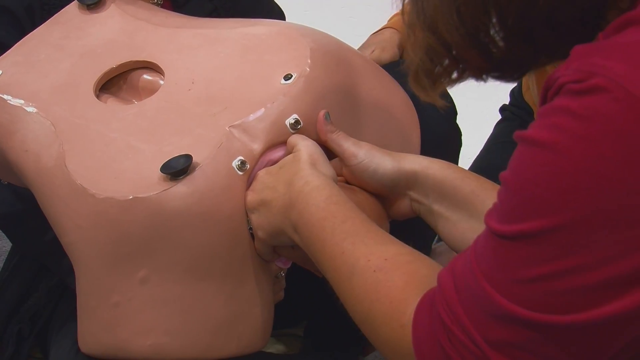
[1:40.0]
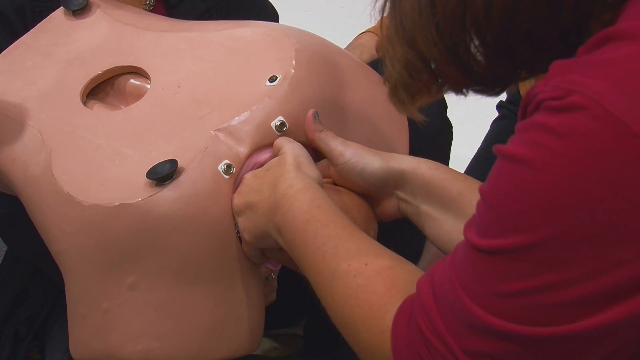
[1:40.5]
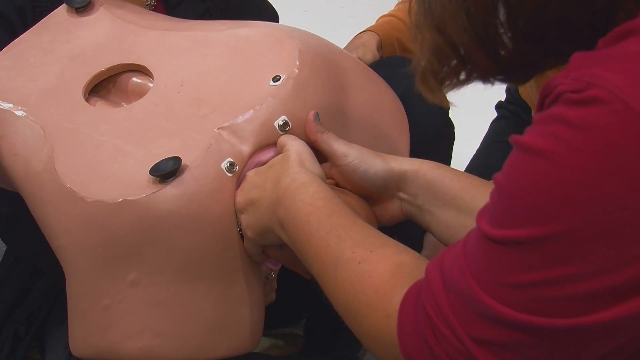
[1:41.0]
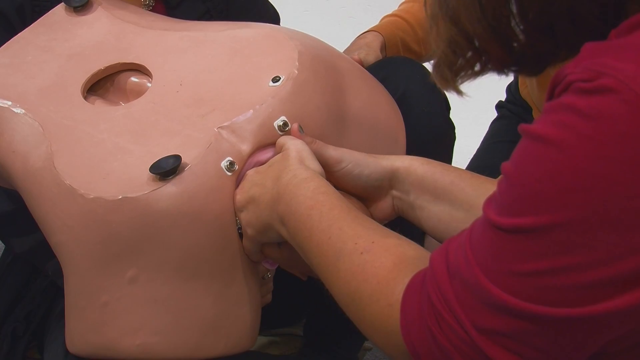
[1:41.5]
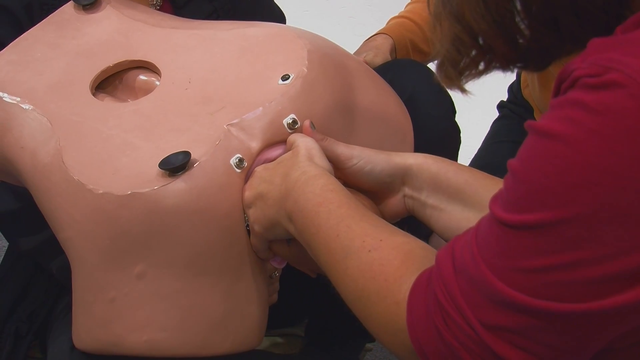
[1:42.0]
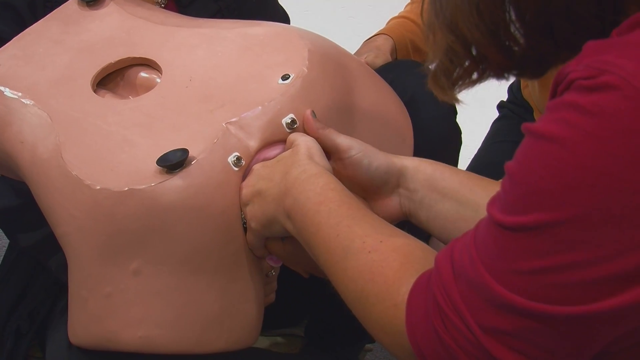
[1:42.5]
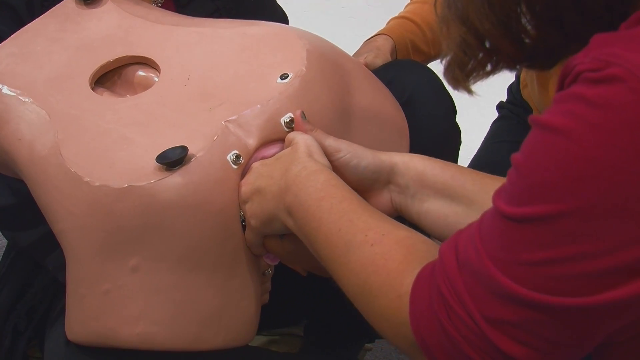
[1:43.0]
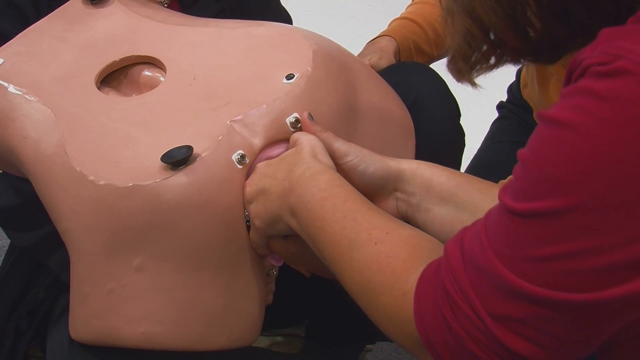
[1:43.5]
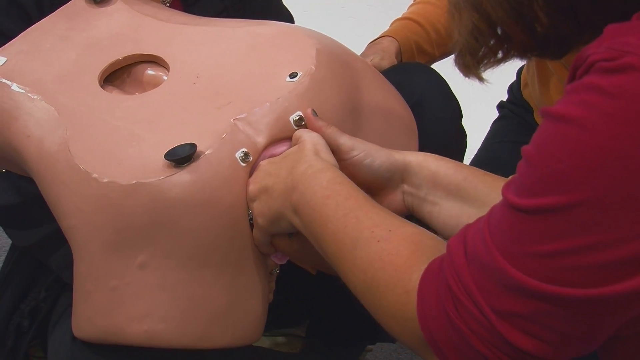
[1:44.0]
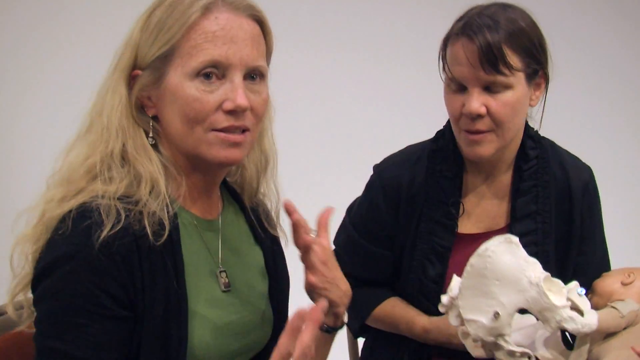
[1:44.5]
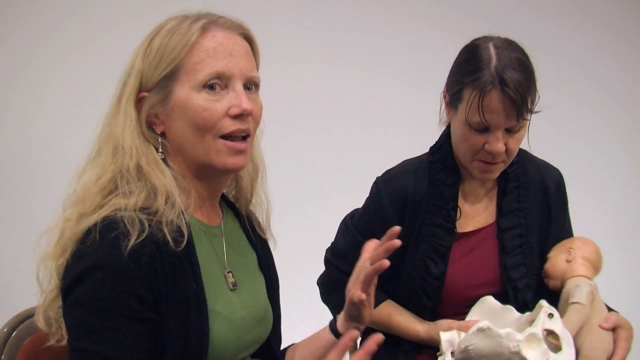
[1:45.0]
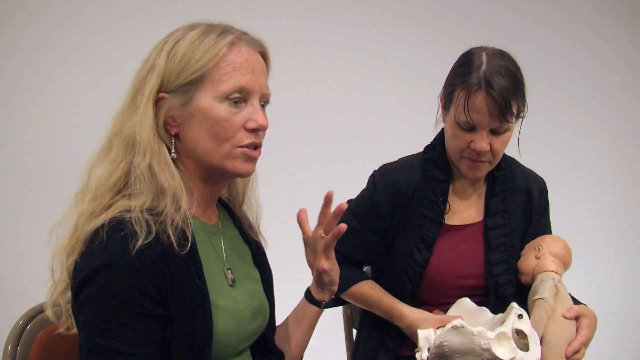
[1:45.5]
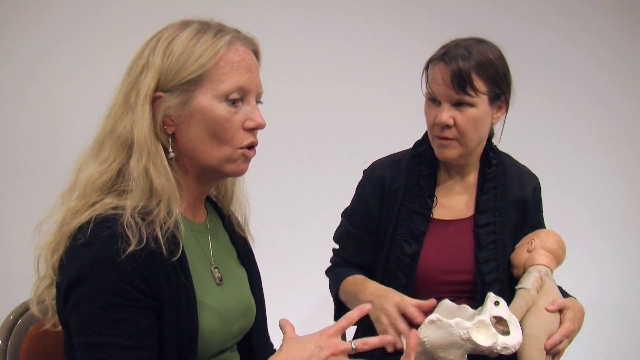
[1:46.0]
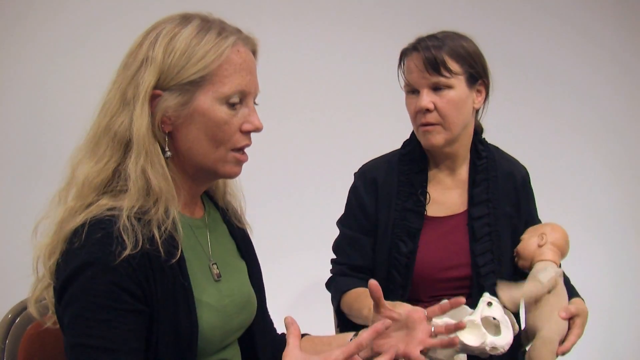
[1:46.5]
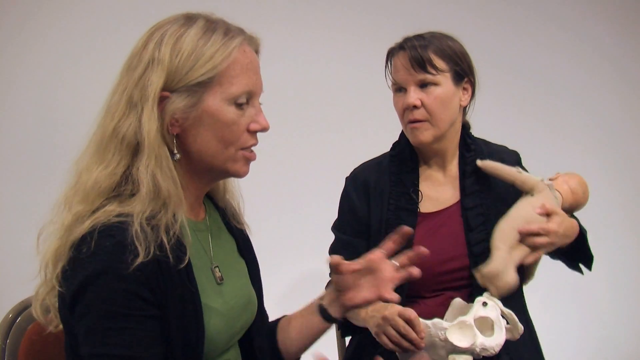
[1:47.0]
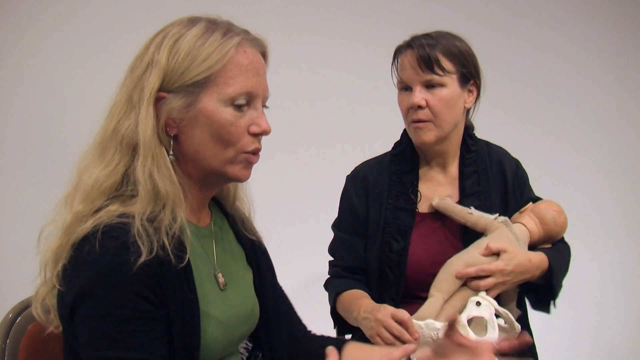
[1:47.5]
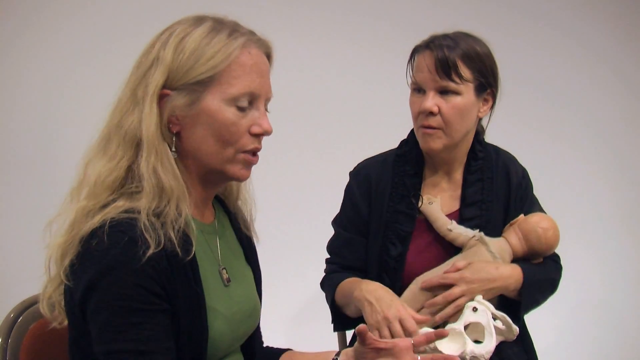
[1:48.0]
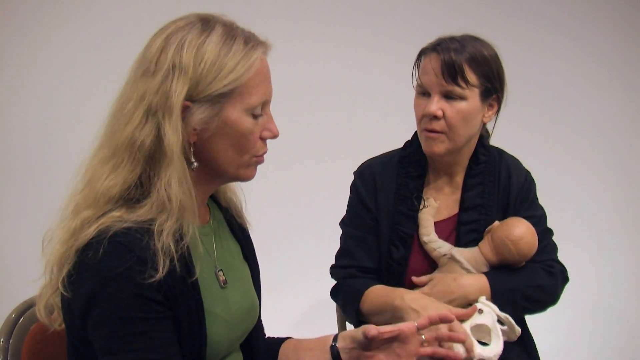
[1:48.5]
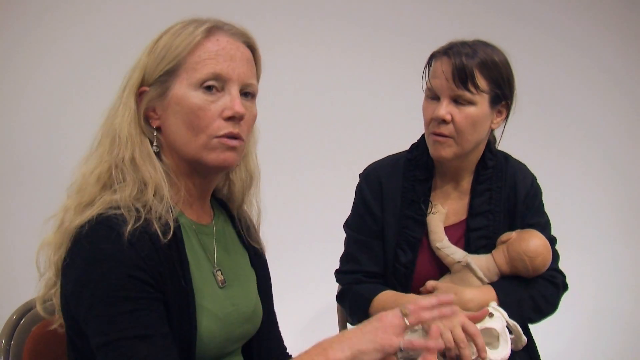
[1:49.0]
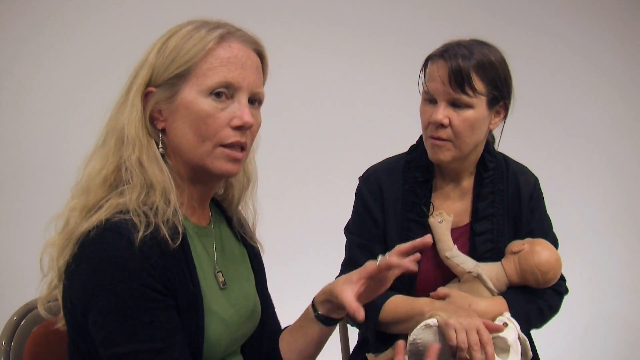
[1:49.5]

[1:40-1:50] The woman with her hand inside the dummy pelvis, attempting to turn the baby, appears to be accompanied by another person wearing an orange top whose face is not seen. The video then changes to Gail sitting back with the woman with long blonde hair and the green top. Gail appears to have the baby in her arms, and the two continue talking while using hand gestures.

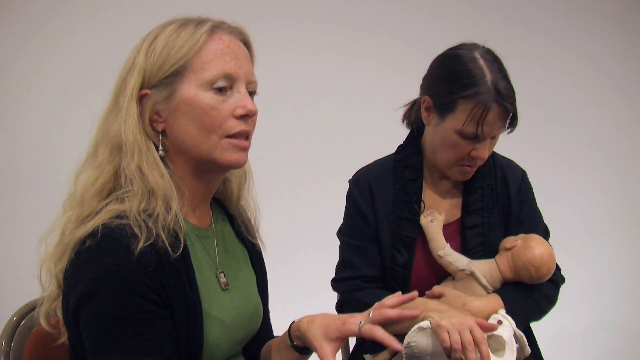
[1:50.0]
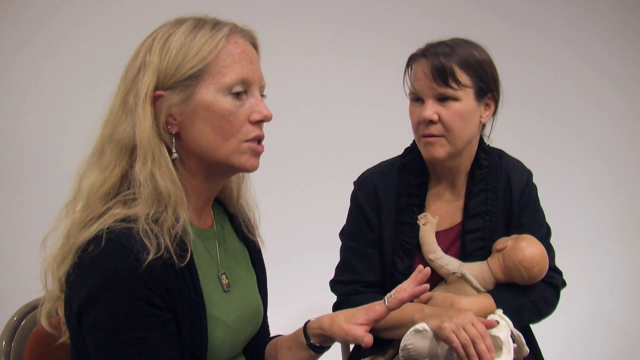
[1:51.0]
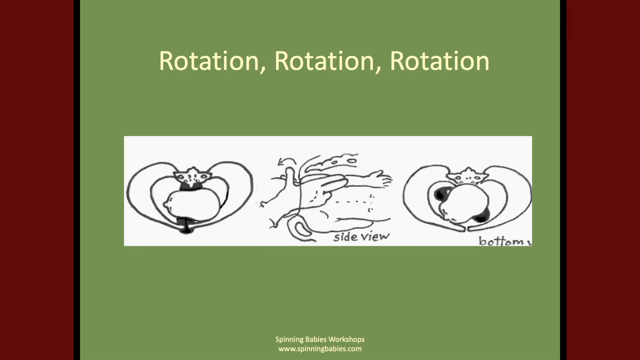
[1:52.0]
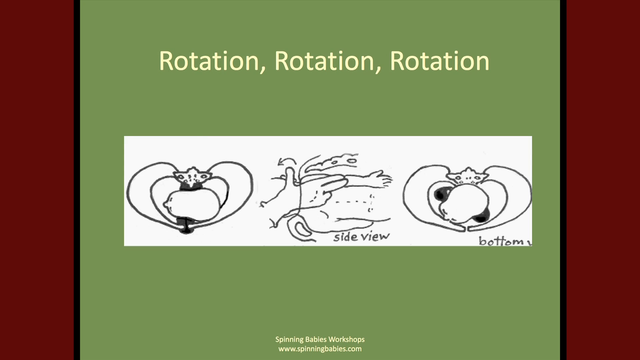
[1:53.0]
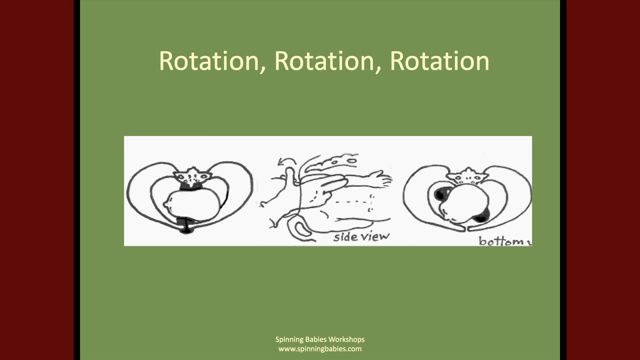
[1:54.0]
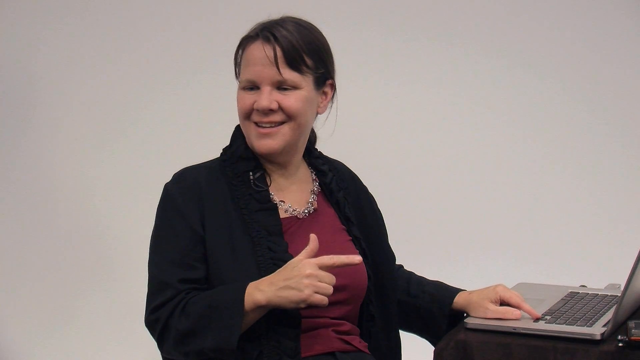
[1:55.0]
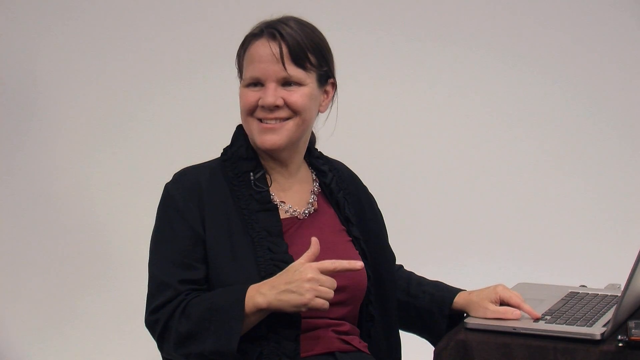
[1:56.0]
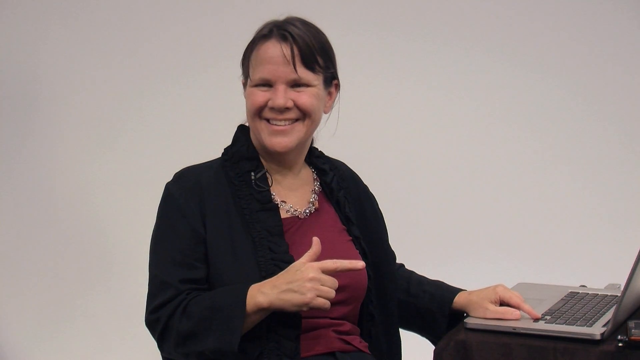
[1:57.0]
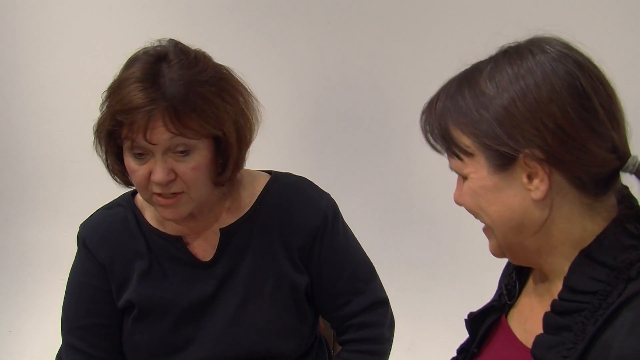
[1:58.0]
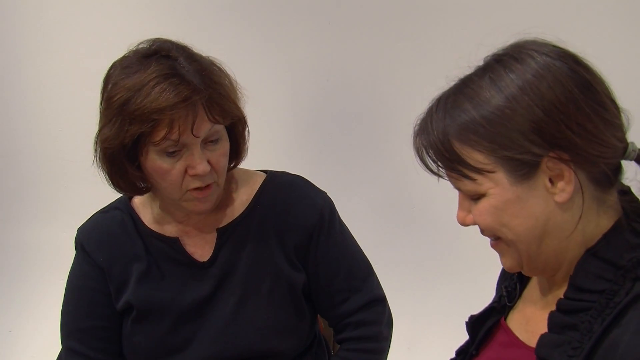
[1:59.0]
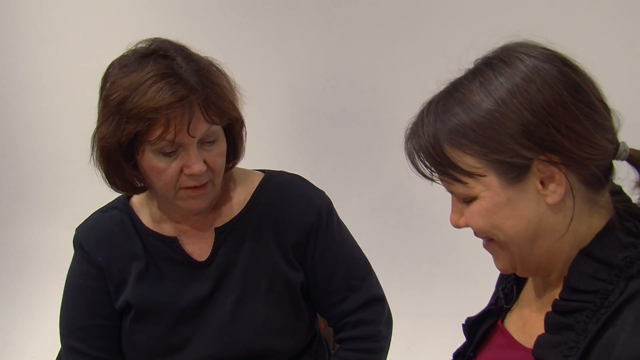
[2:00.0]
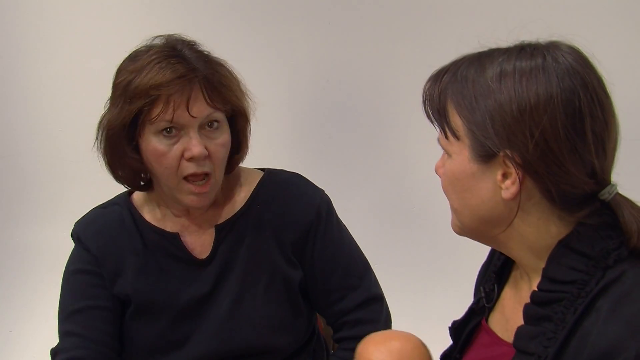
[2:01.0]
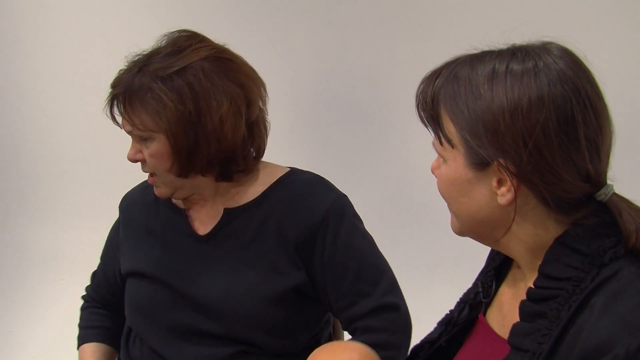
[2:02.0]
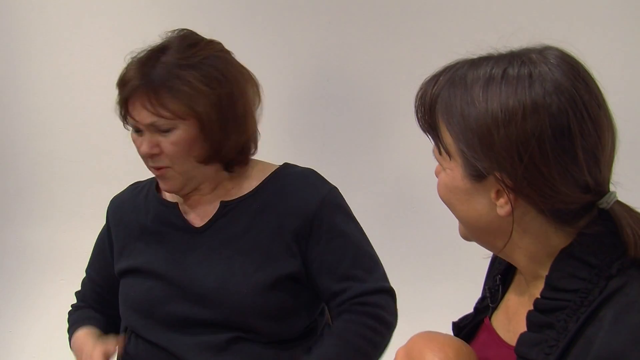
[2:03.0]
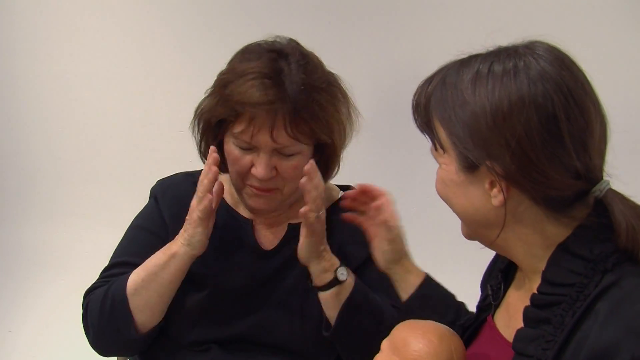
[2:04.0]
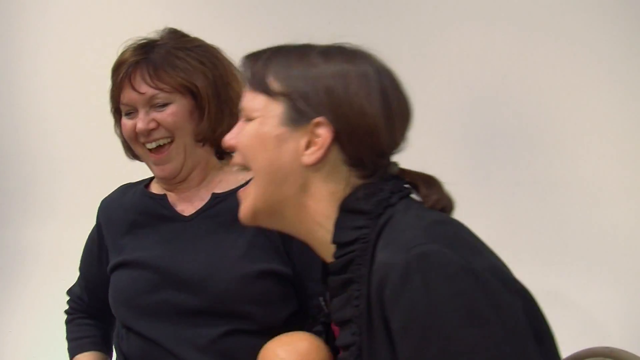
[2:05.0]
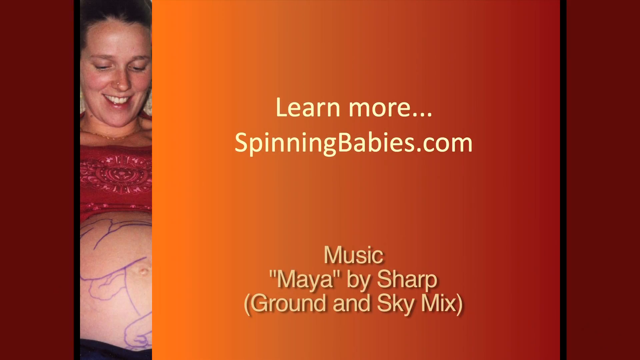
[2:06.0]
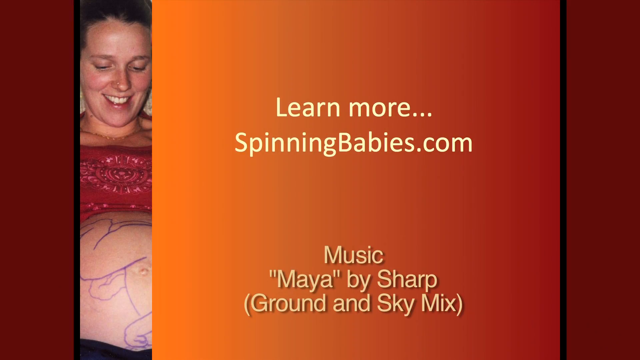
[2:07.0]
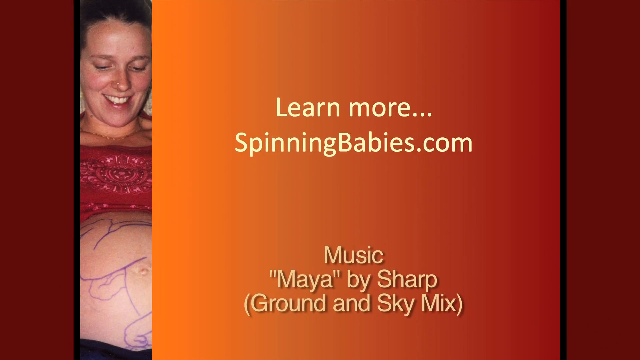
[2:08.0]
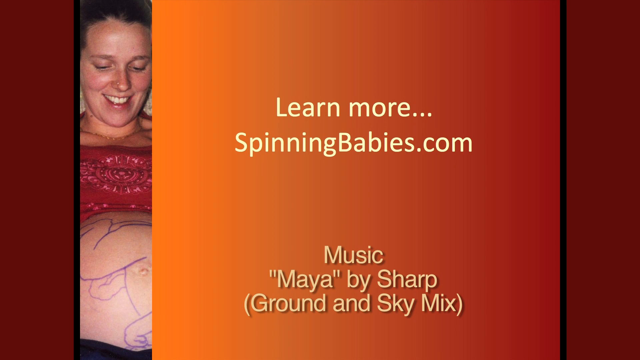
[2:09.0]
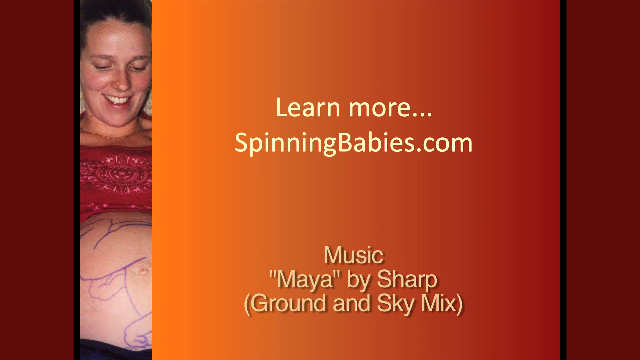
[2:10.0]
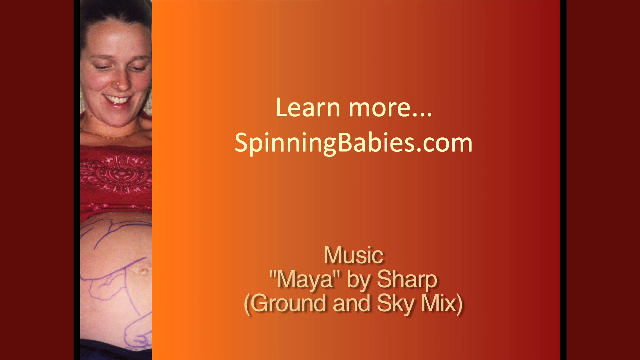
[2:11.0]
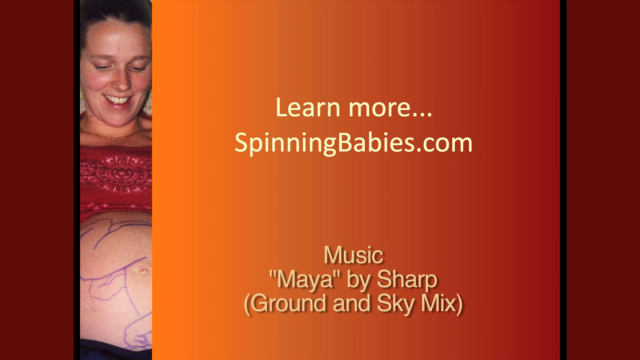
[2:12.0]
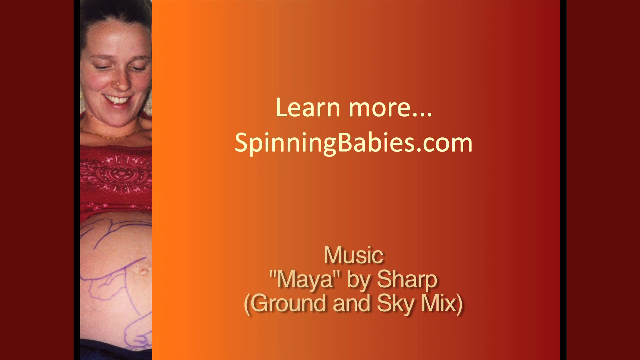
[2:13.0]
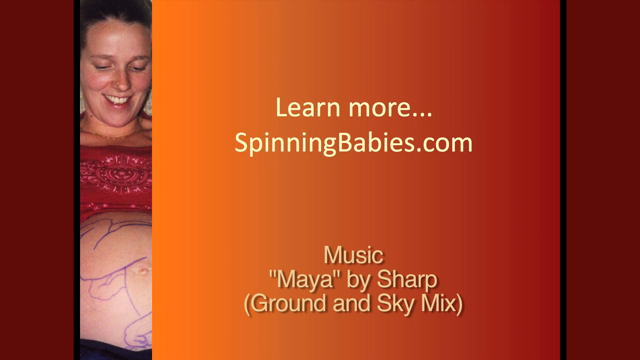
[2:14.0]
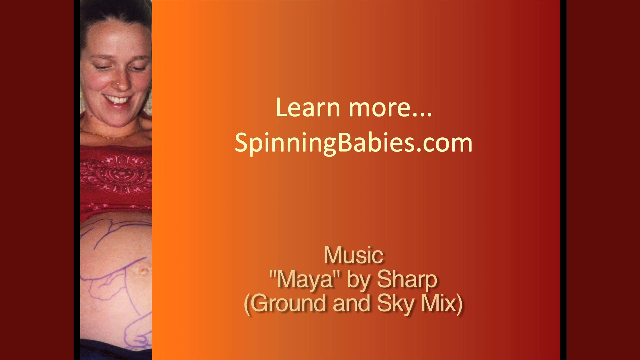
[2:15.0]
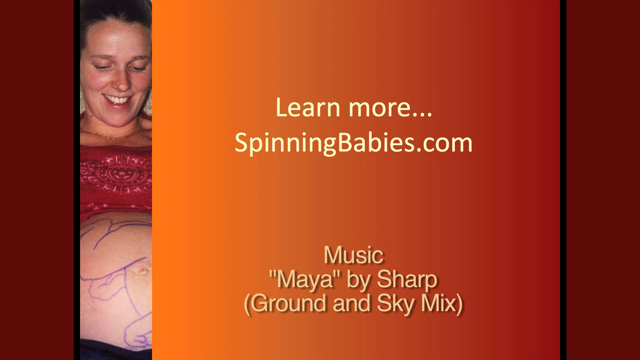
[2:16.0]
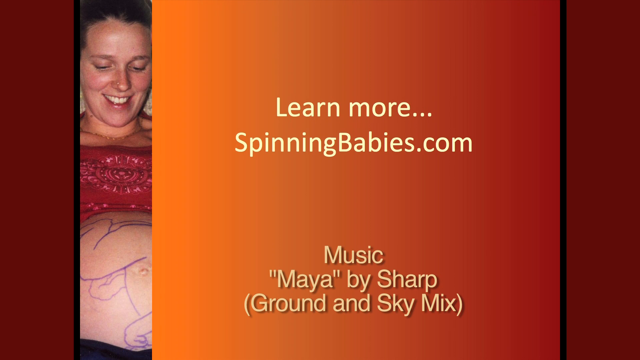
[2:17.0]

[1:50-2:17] Gail and the blonde woman sit and talk. Another slide from the presentation appears: a green slide with a maroon background, with "rotation, rotation, rotation" in yellow-hued letters. Beneath that is an infographic-like drawing showing a front view of a baby's head coming out of the pelvis, a side view showing the midwife's hands going into the vagina, and a bottom view showing what it would look like from below. Gail continues to address the group, appearing happy, with laughing and some giggling. Another woman joins Gail on screen; she is a brunette with shorter hair and appears to be older. They laugh together. The video finishes with a final presentation slide in the same format as the opening introduction slide, this time reading "learn more... spinningbabies.com" and crediting the music: "Music Maya by Sharp Ground and Sky Mix".